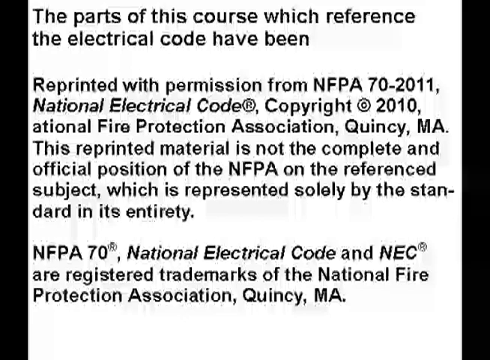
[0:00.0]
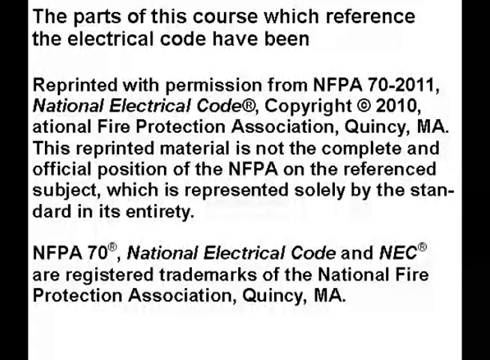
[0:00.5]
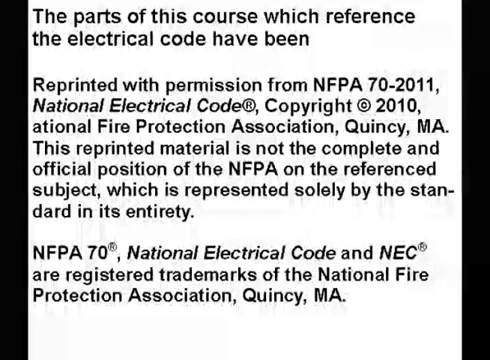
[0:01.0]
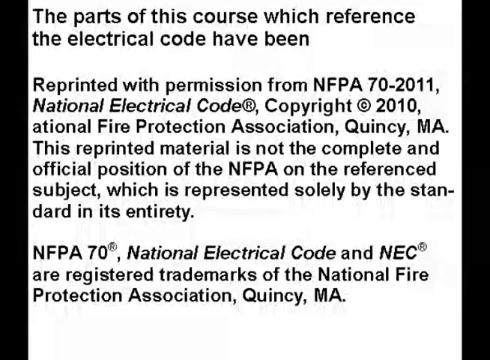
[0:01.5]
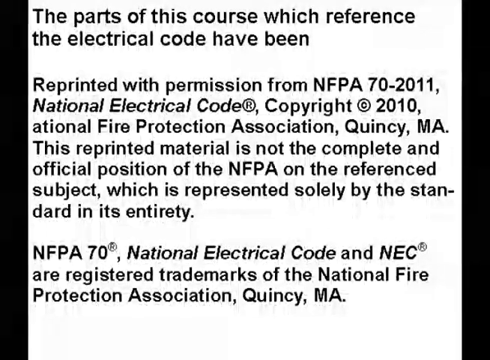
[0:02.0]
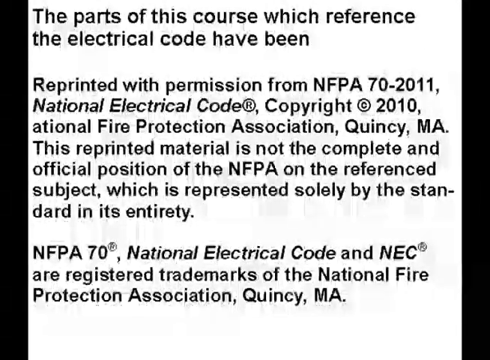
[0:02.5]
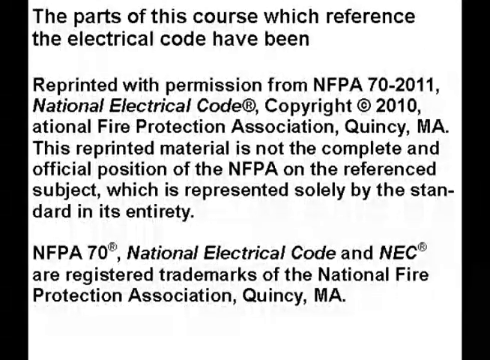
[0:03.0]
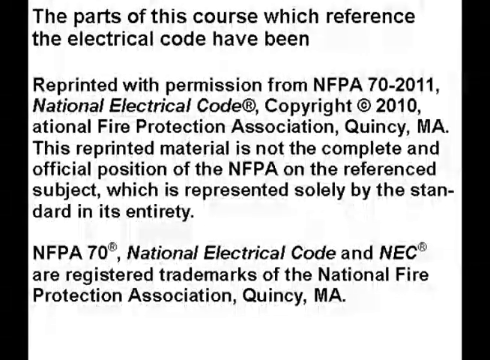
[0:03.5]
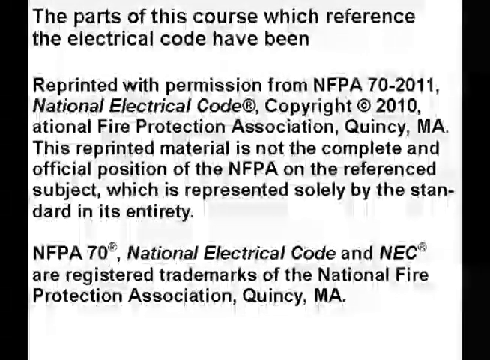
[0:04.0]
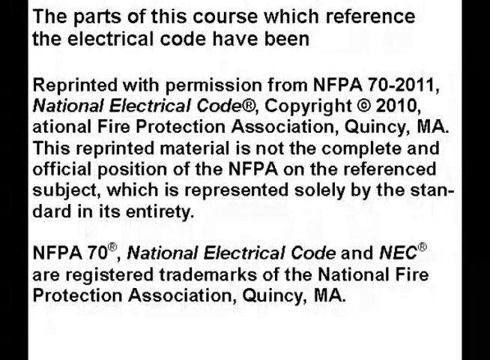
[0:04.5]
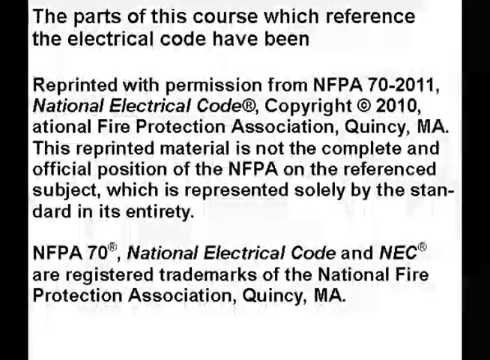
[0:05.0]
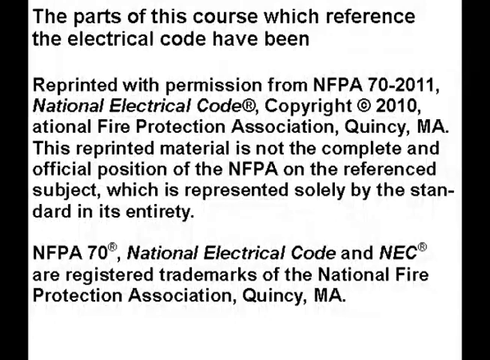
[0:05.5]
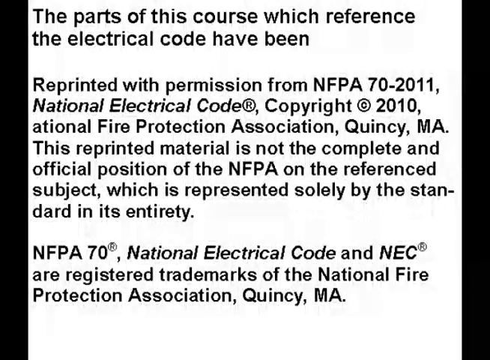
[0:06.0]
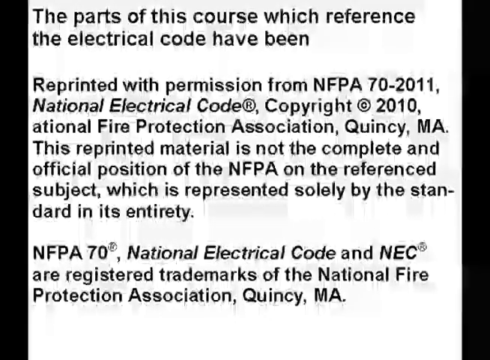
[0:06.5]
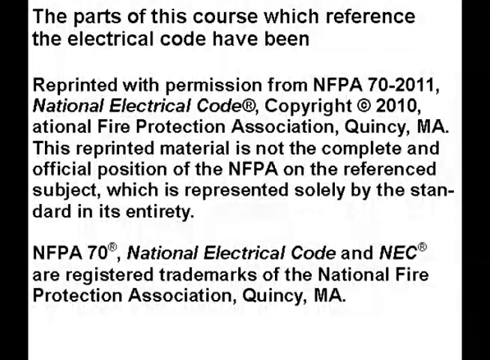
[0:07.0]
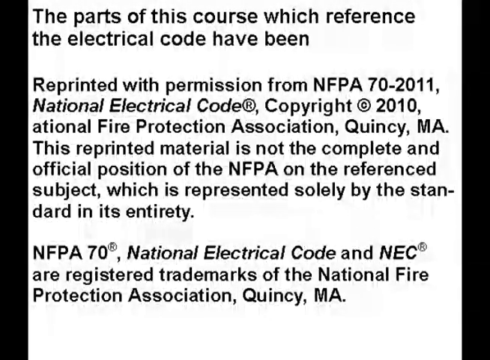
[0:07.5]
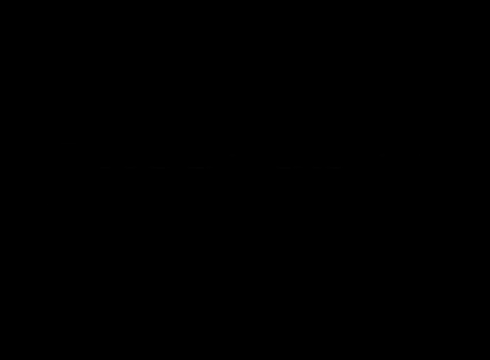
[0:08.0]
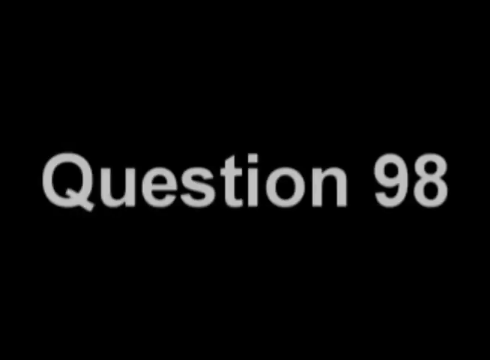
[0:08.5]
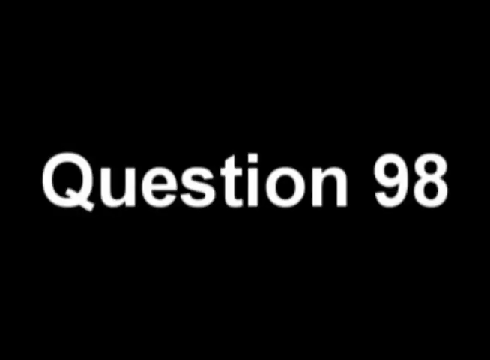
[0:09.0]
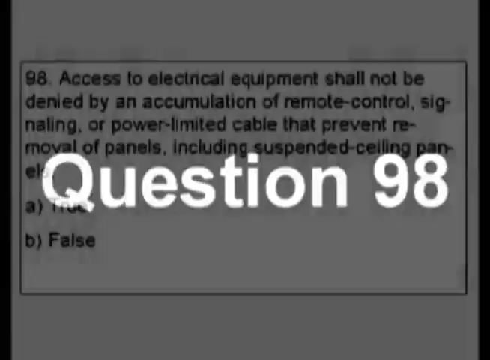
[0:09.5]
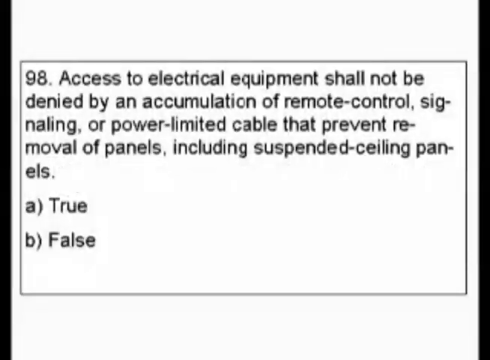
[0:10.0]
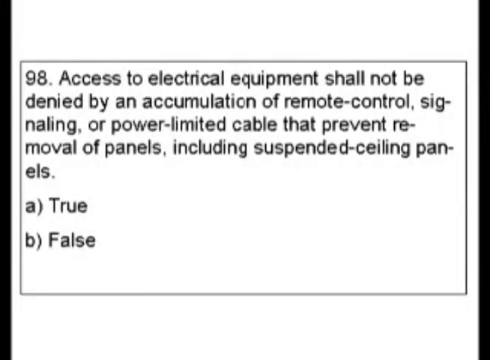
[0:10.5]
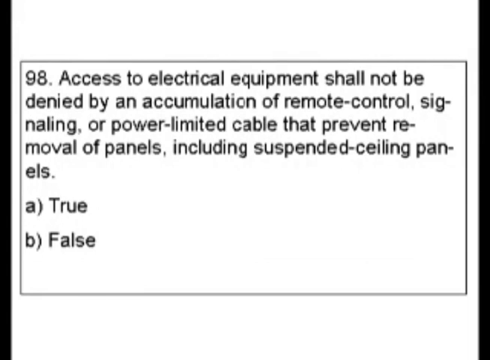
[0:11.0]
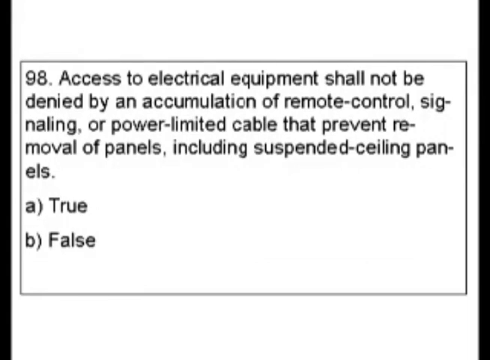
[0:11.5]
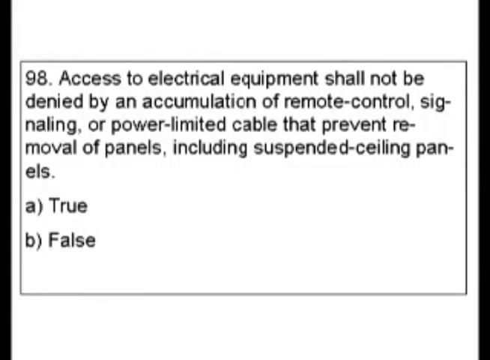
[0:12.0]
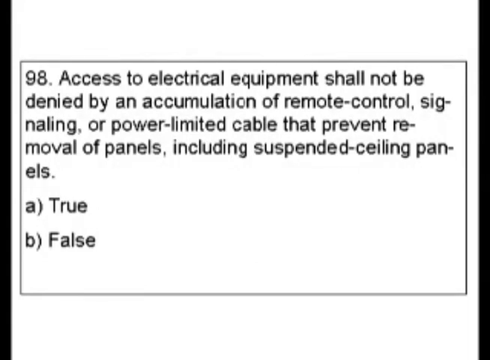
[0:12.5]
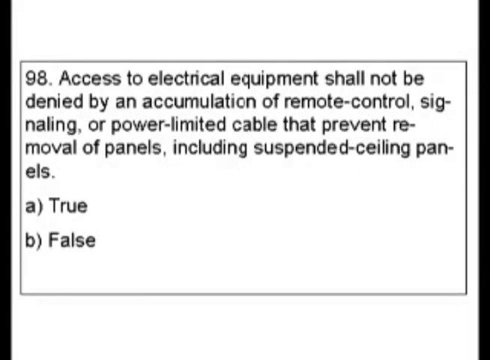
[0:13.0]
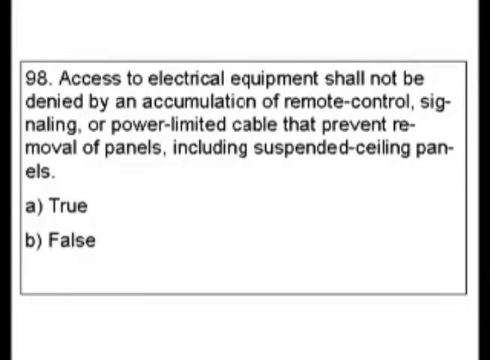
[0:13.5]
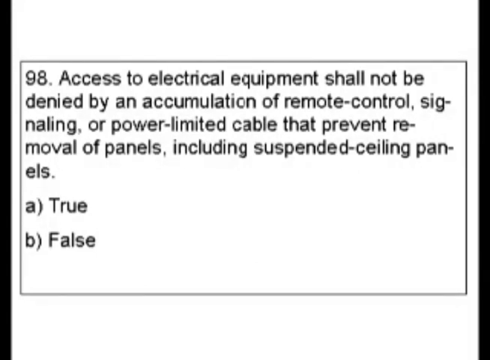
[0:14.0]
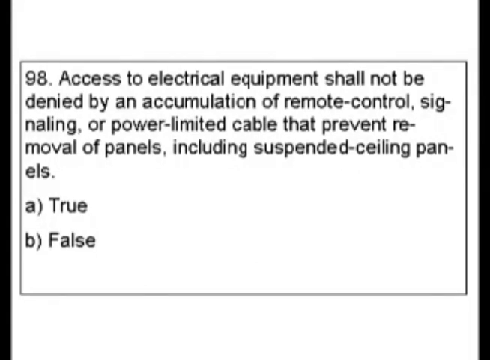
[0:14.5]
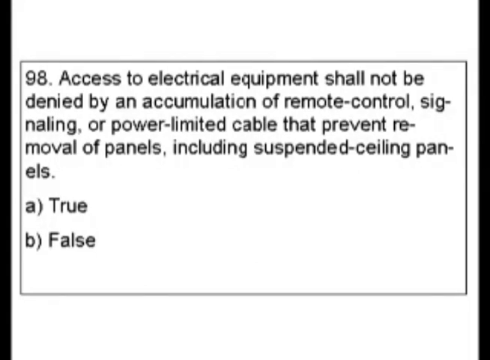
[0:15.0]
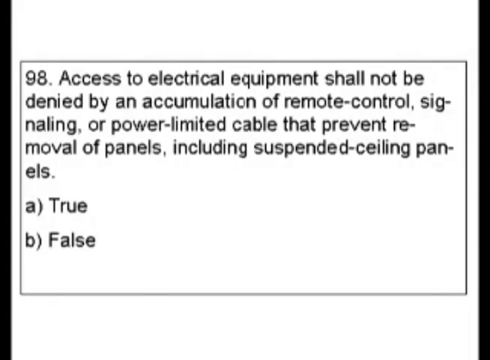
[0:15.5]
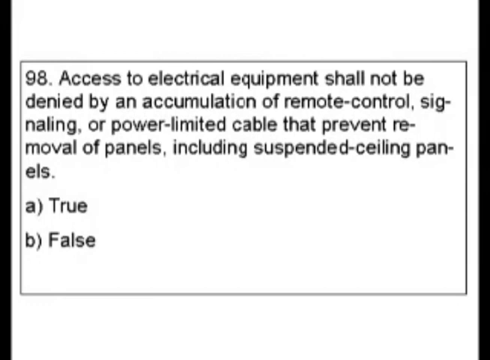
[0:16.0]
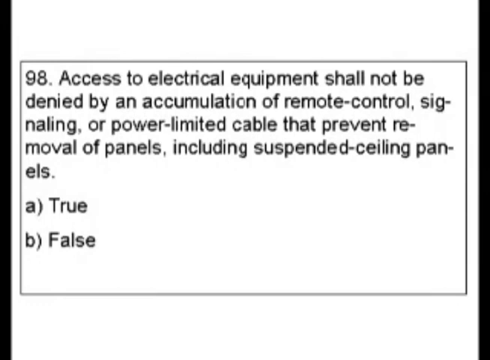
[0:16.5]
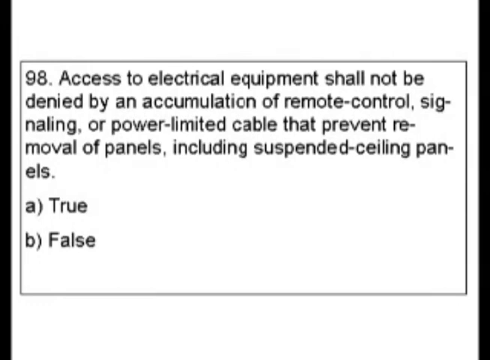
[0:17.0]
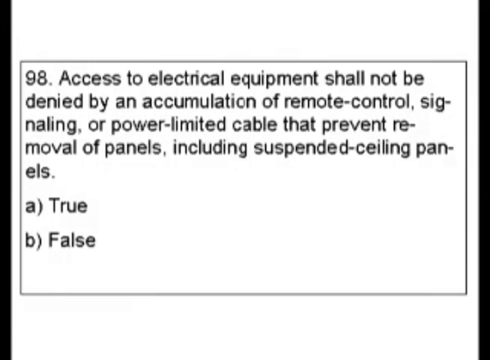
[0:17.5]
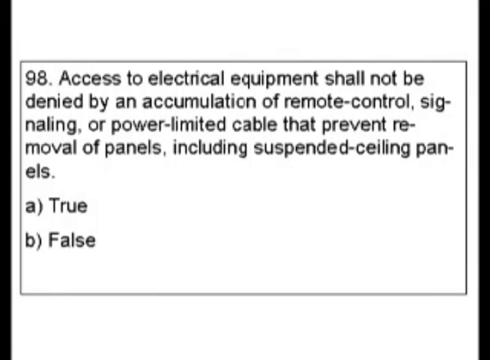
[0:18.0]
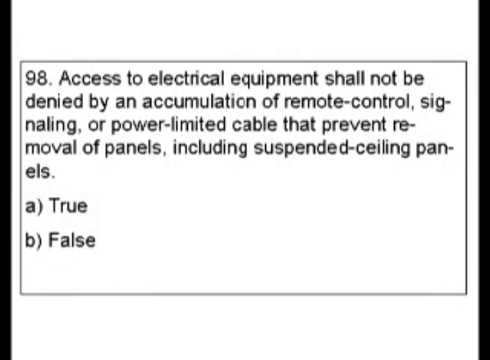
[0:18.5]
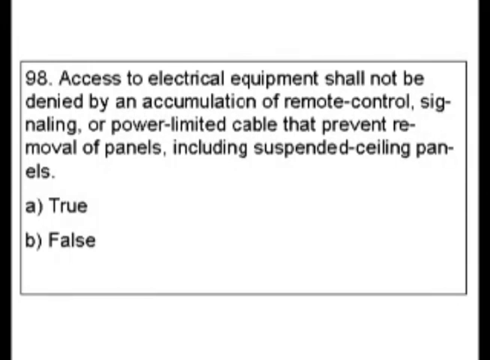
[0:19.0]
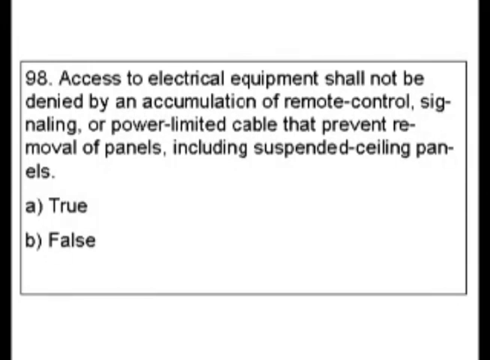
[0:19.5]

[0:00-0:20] A screen shows black text on a white background stating that parts of this course referring to the electrical code have been reprinted with permission from NFPA 70-2011, National Electrical Code, copyright 2010, National Fire Protection Association, Quincy, Maine. The view then moves to question 98, shown in a square, which reads "access to electrical equipment shall not be denied by accumulation of remote control, signaling or power limited cable that prevents the removal of panels, including suspended ceiling panels." There are two answer options: the first is true and the second is false. Text also states that "NFPA 70 National Electrical Code and NEC are registered trademarks of the National Fire Protection Association of Quincy, Maine."